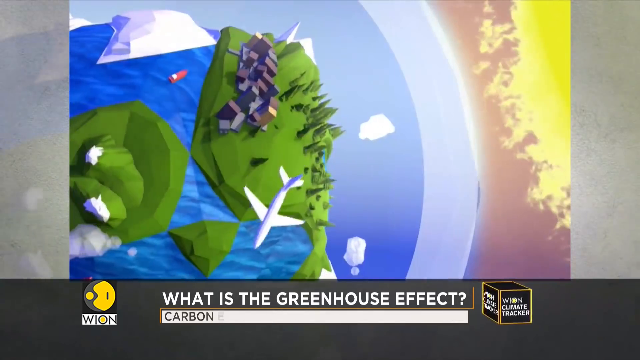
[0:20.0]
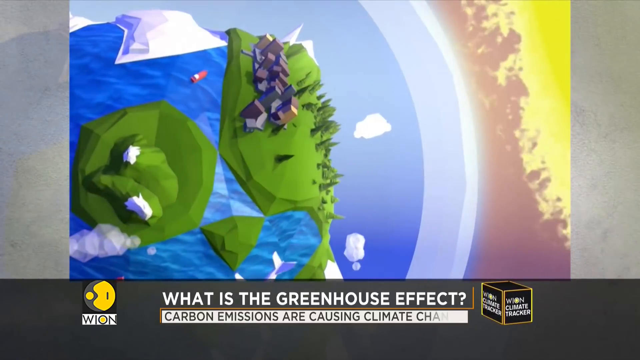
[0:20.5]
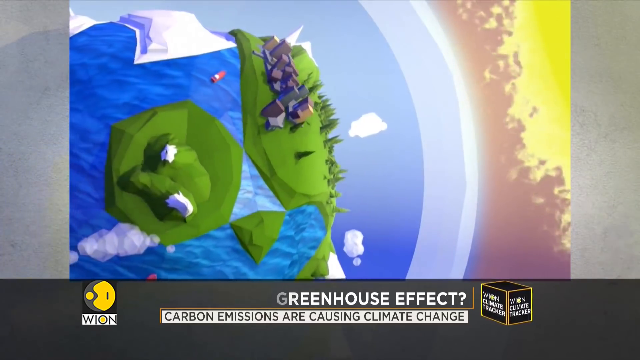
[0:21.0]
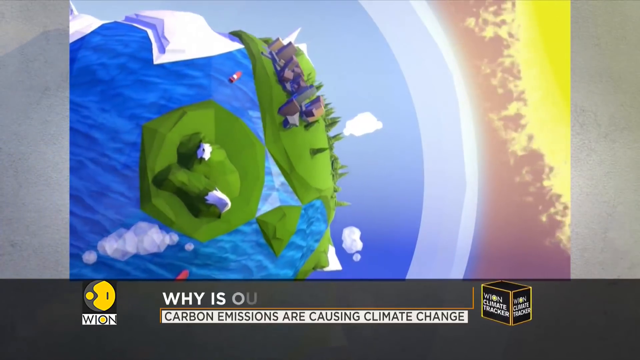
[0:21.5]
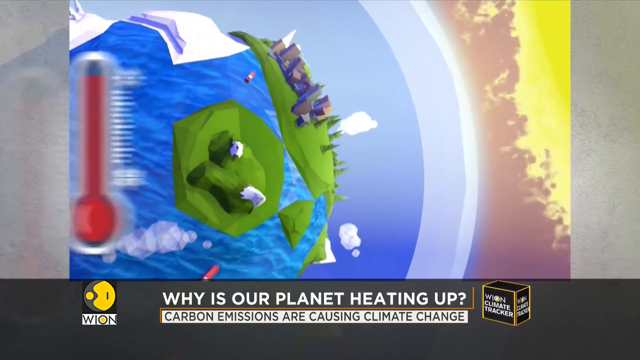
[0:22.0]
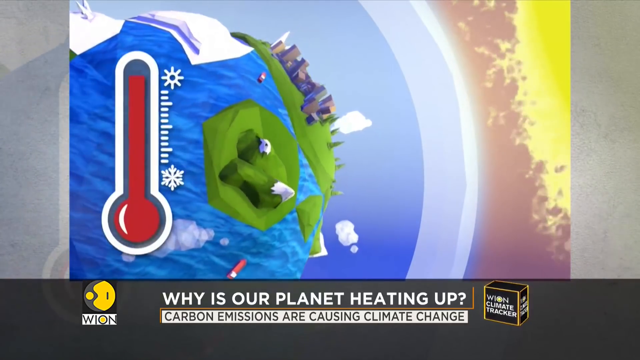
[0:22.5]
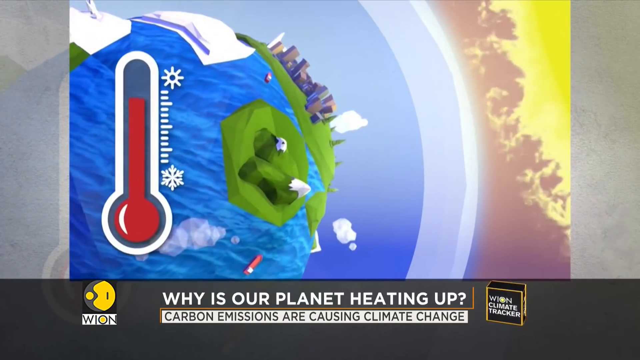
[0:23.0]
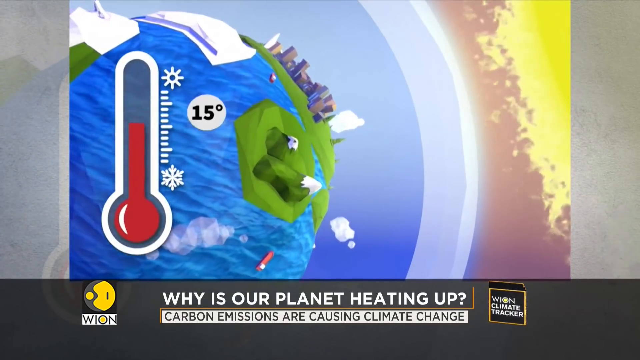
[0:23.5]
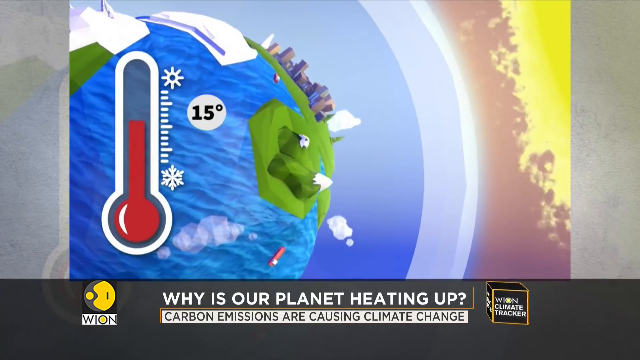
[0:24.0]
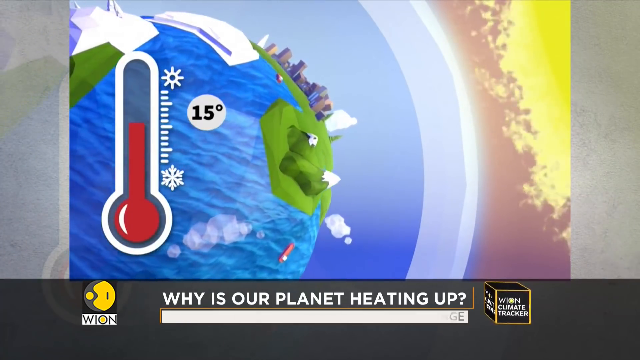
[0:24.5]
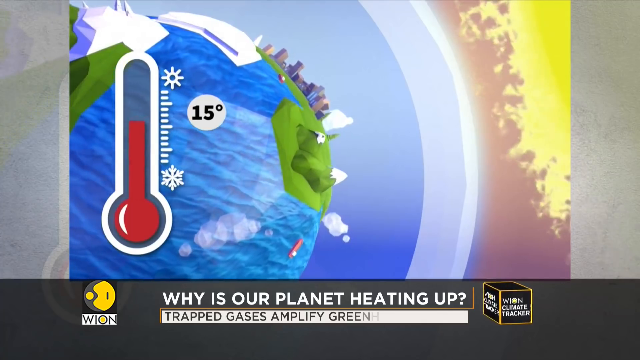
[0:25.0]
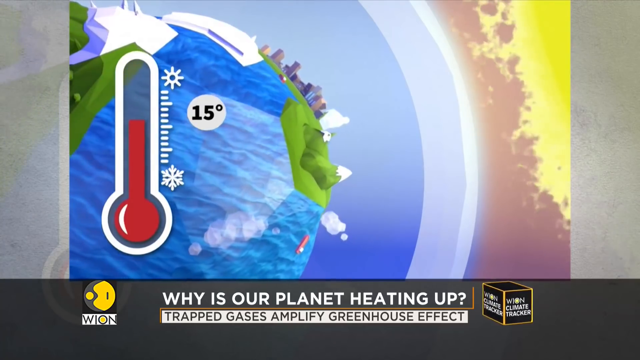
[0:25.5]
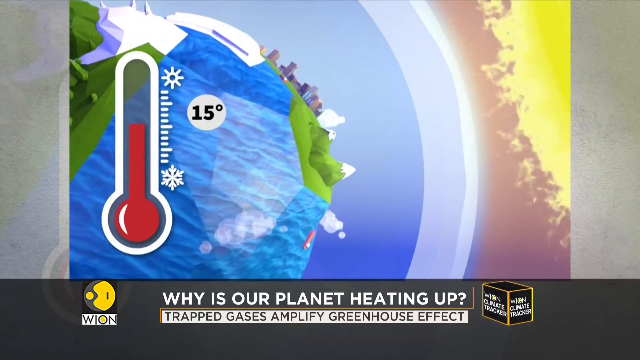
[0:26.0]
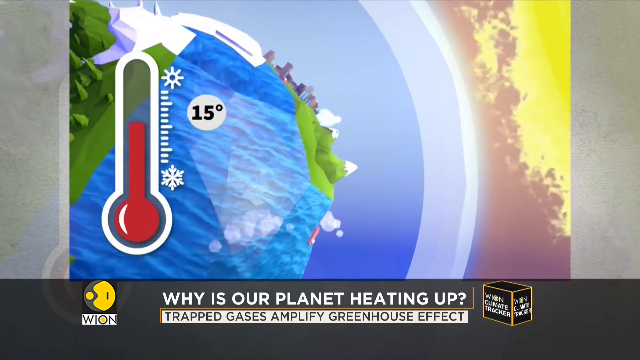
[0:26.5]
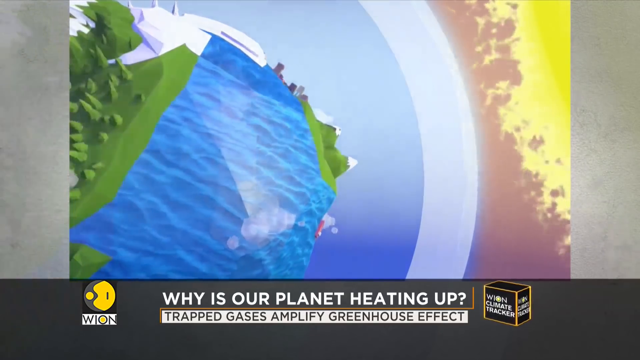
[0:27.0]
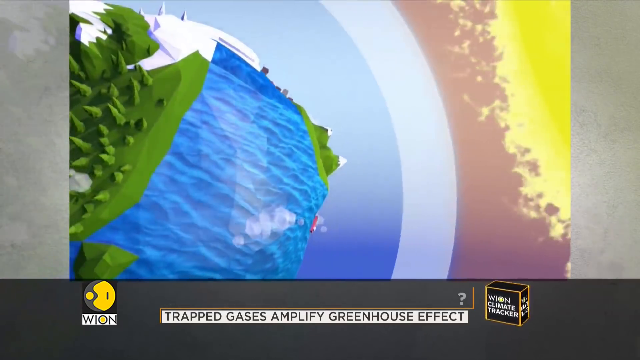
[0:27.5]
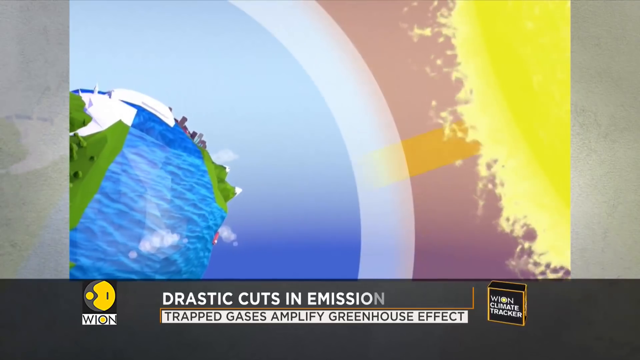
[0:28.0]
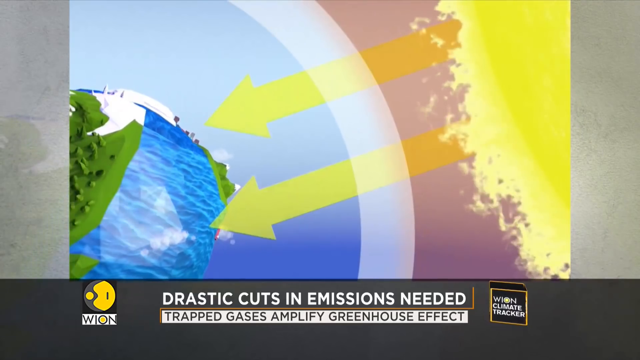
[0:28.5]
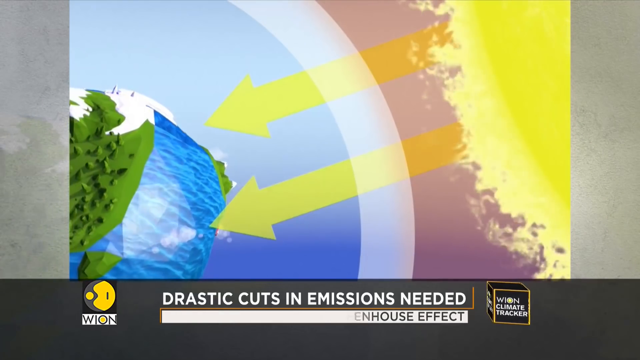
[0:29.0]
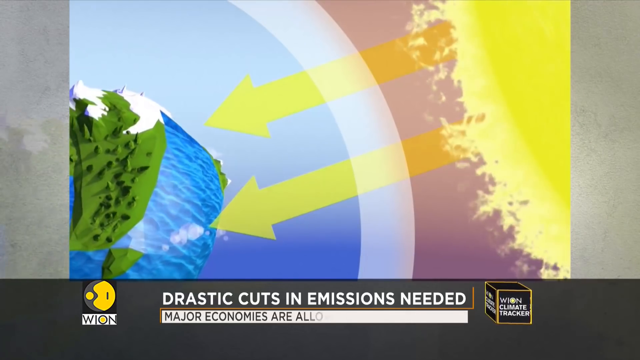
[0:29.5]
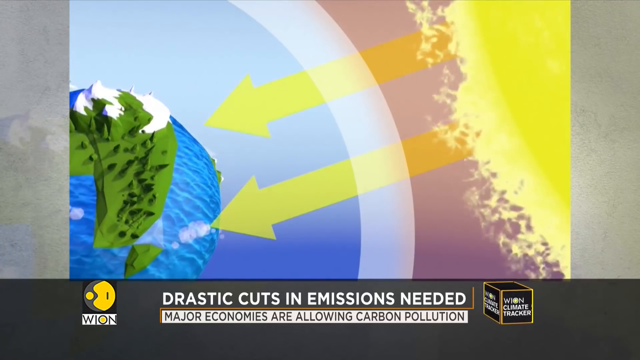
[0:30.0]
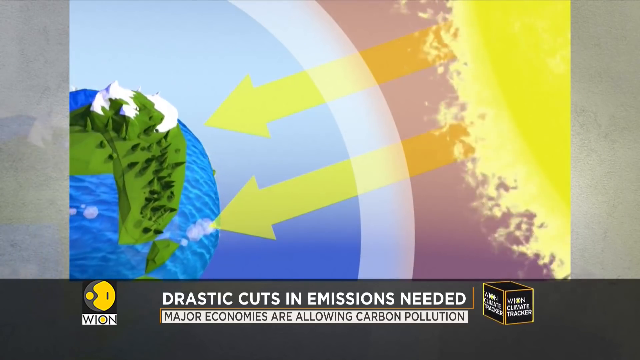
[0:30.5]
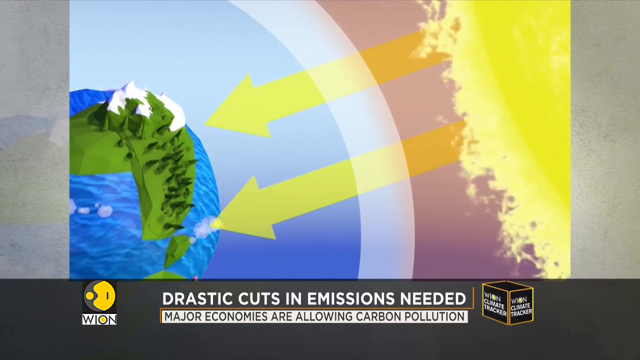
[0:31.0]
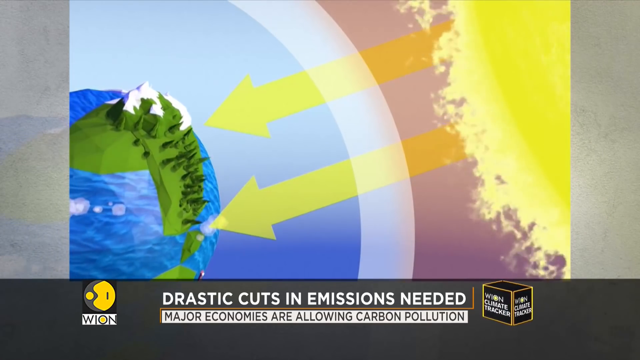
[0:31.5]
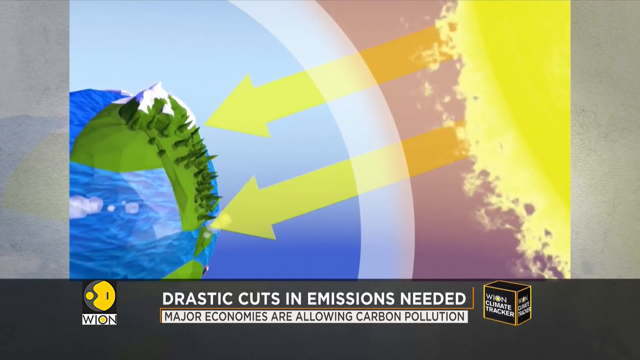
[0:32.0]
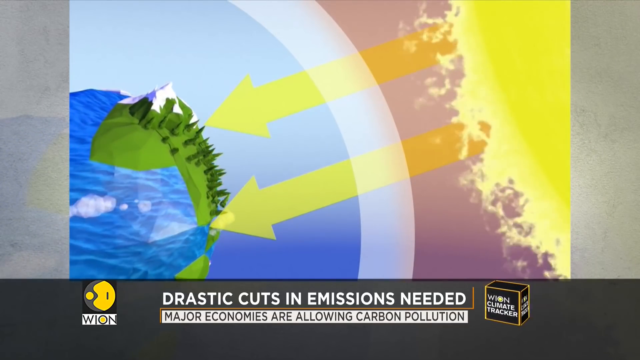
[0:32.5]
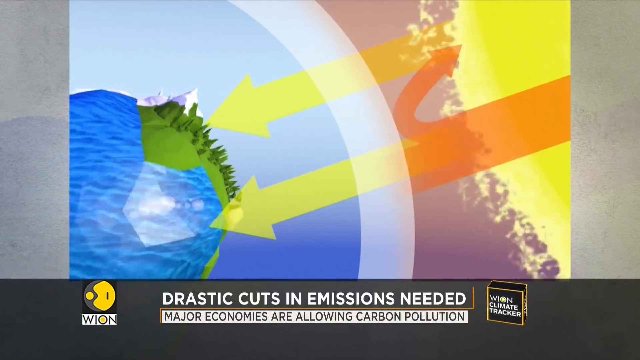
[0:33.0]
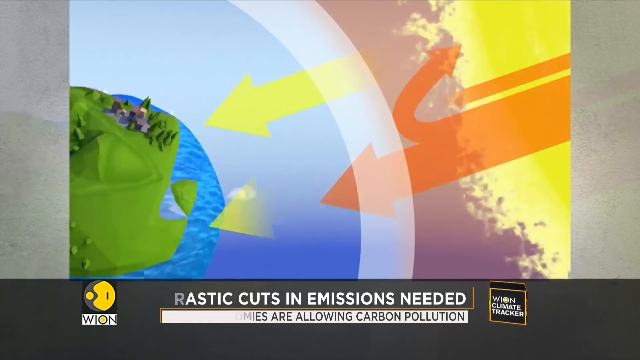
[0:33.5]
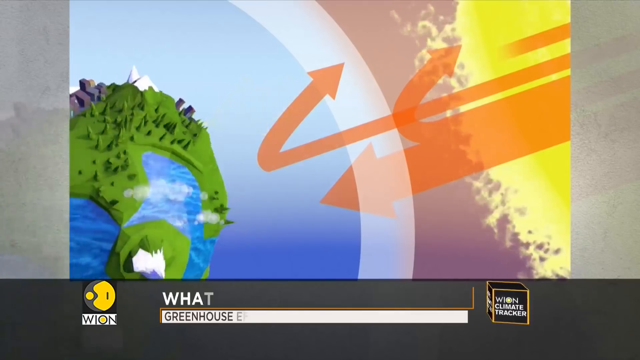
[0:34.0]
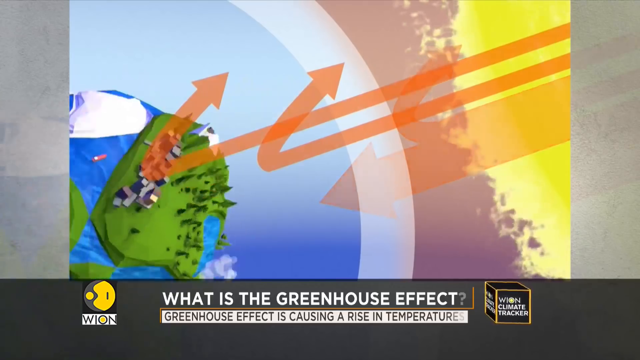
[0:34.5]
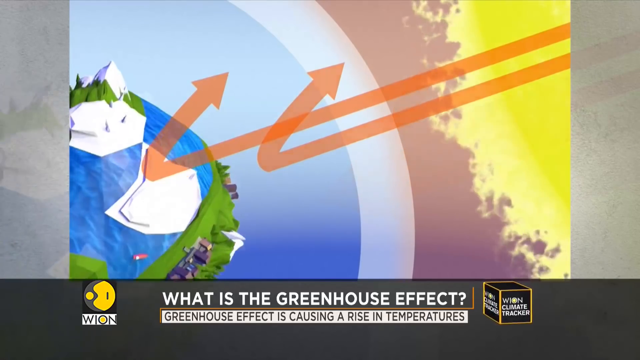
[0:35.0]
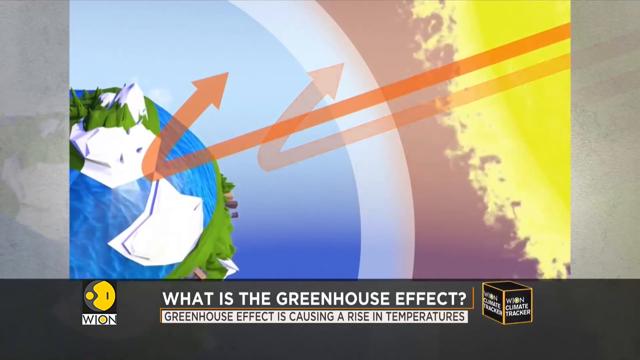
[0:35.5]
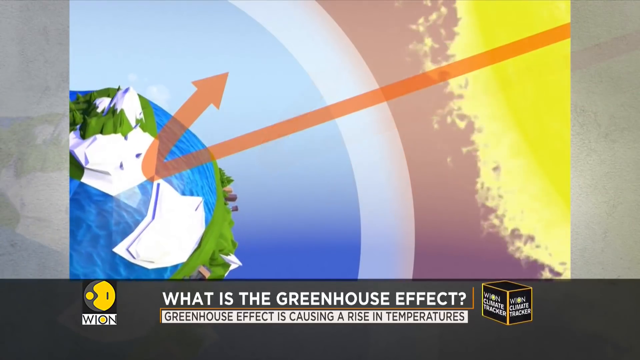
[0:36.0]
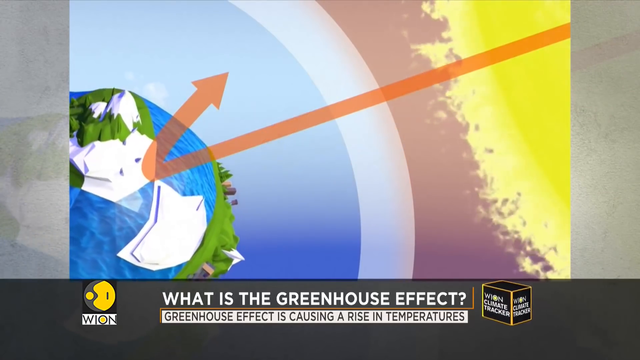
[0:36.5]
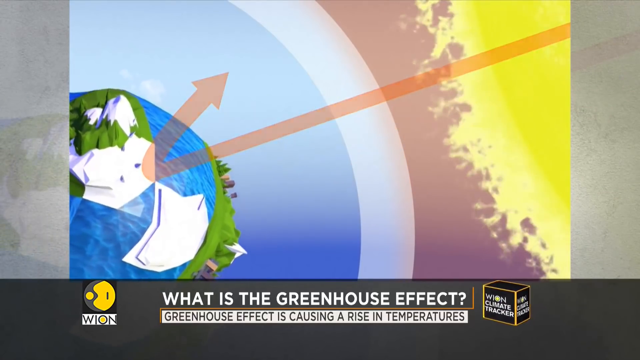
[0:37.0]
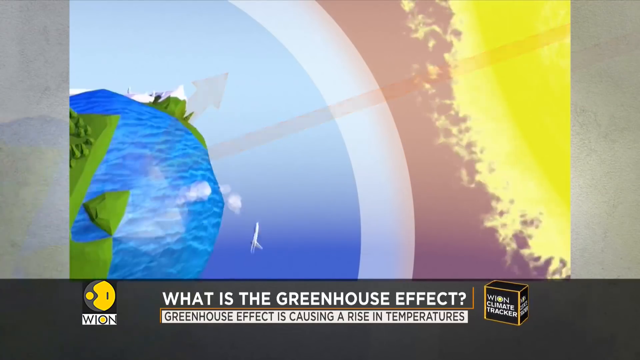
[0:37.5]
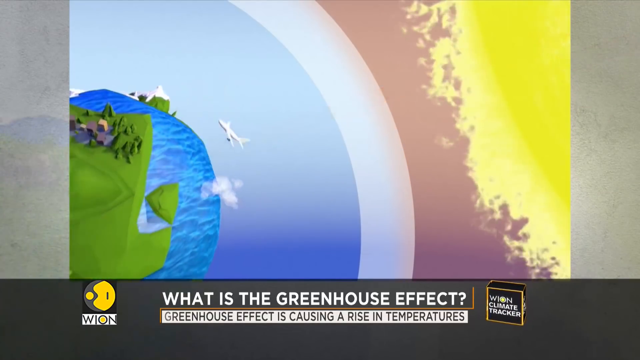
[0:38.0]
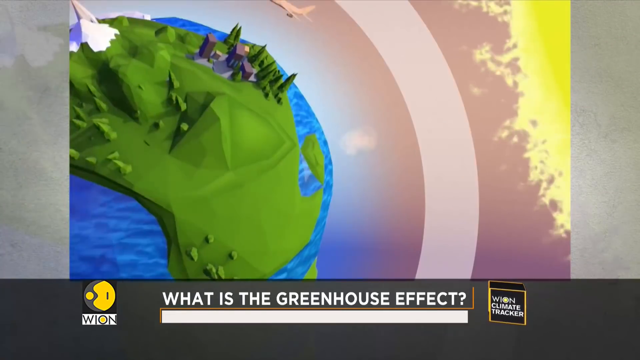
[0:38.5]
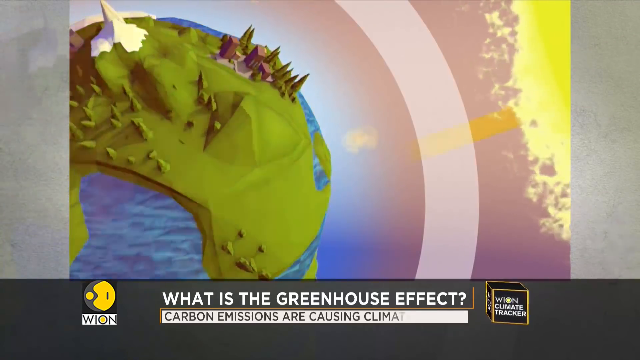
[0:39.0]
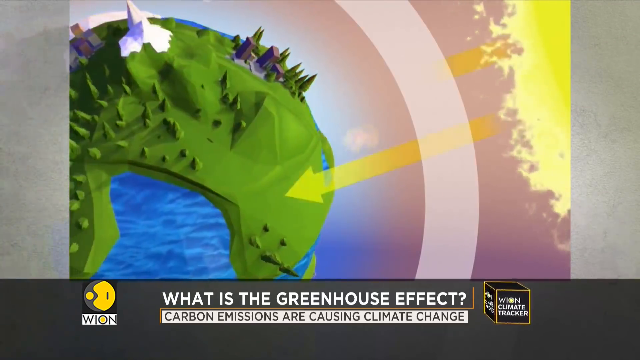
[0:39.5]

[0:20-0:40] The newscast seems to focus on global warming and rising temperatures around the globe. A banner at the bottom of the screen reads "Why is our planet heating up?" with more text under it: "trapped gases amplify greenhouse effect, drastic cuts in emissions needed. Major economies are allowing carbon pollution." A graphic on the screen shows the sun heating up the Earth, with the sun's rays going through the atmosphere at a high rate and heating the planet; instead of bouncing back up into the sky, the rays apparently just hit the Earth and stay there.